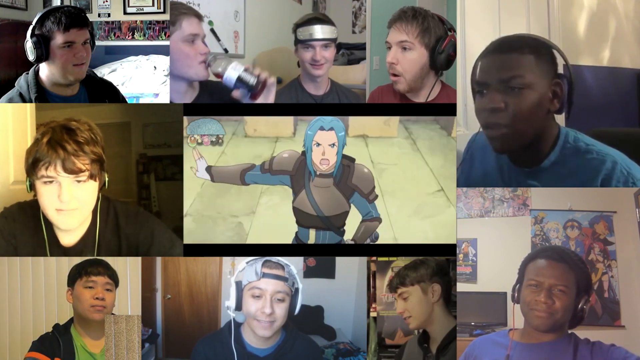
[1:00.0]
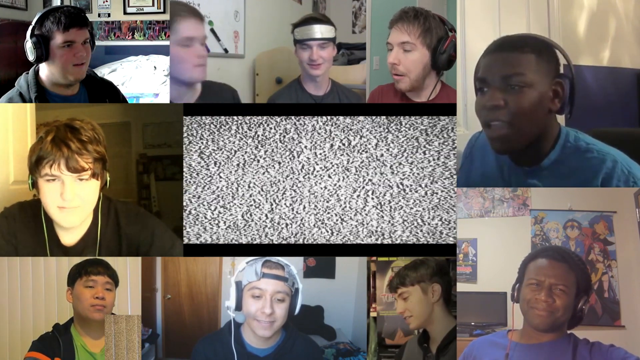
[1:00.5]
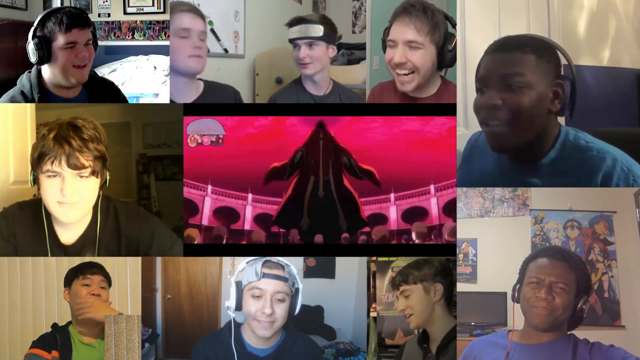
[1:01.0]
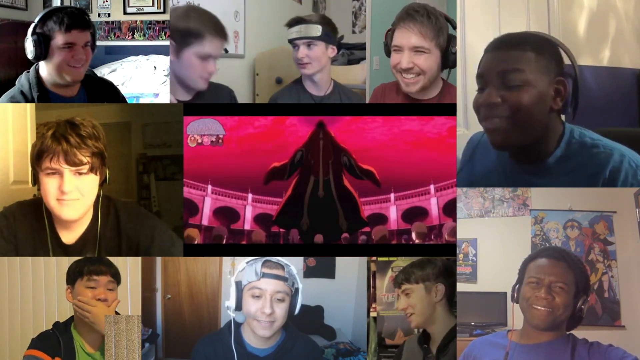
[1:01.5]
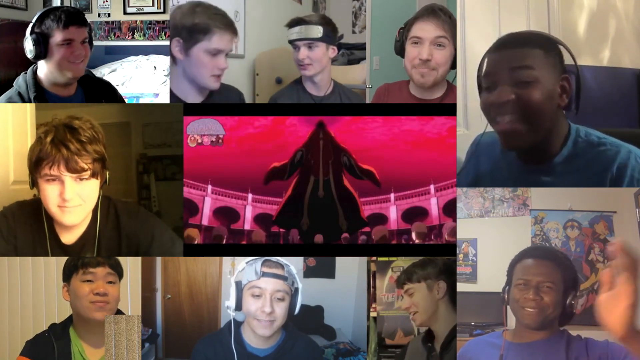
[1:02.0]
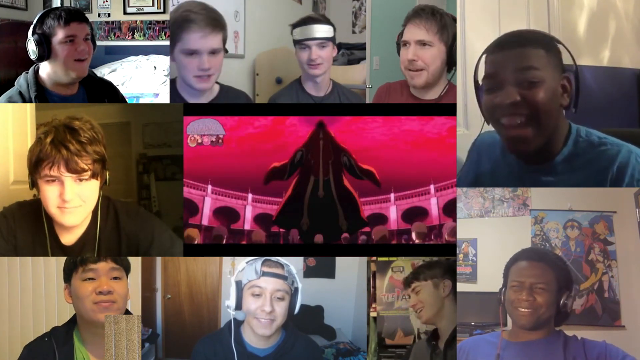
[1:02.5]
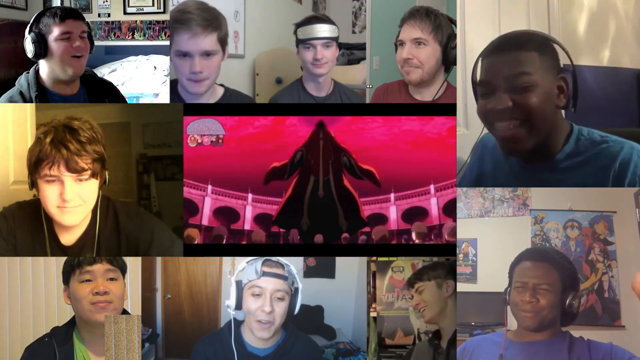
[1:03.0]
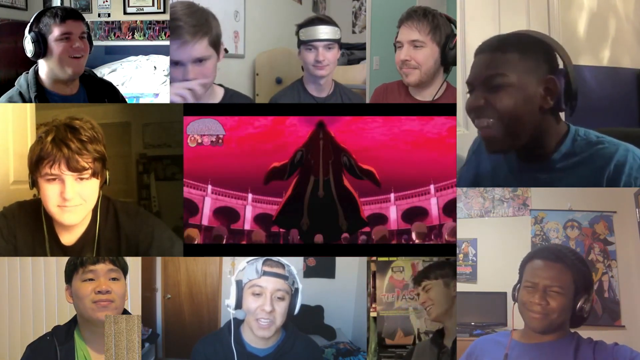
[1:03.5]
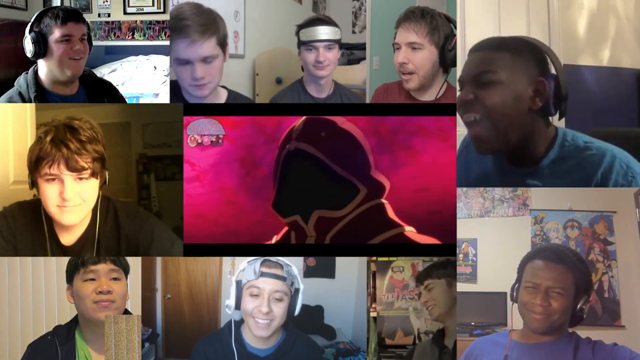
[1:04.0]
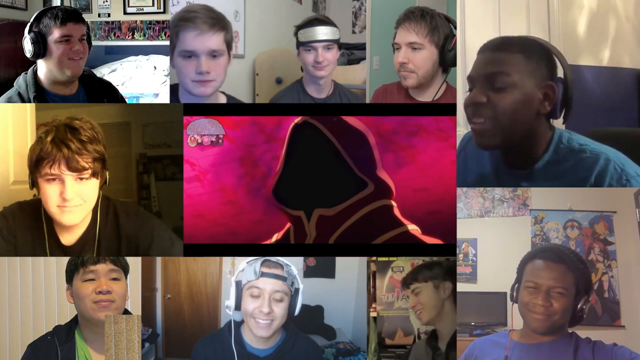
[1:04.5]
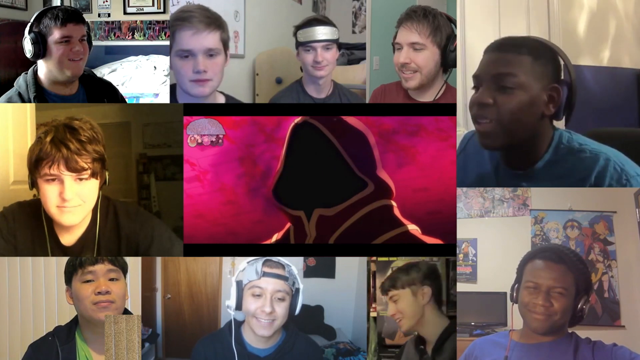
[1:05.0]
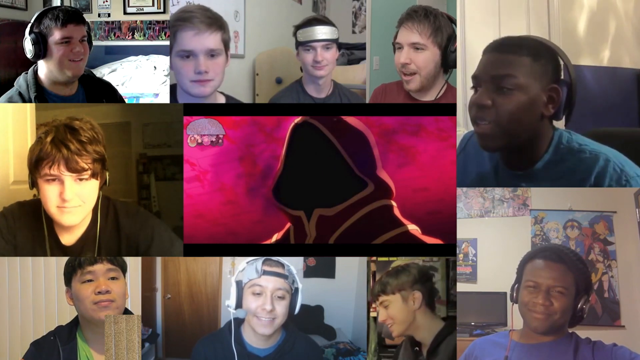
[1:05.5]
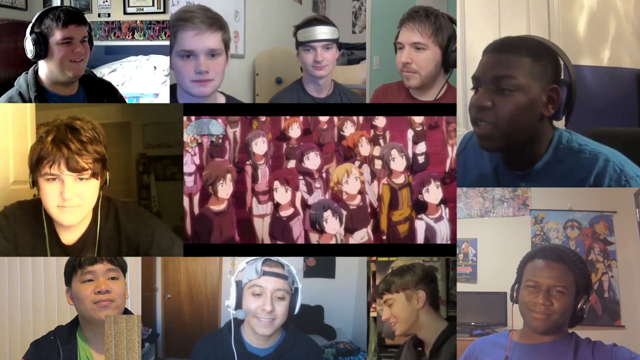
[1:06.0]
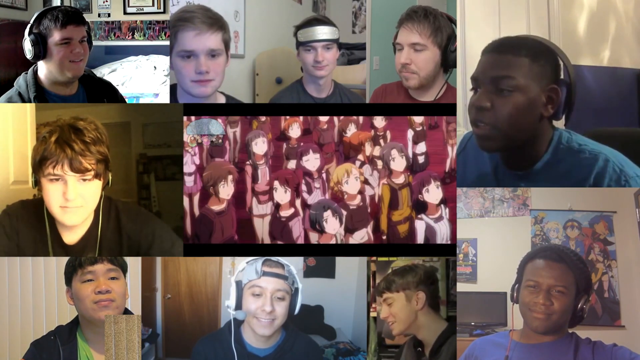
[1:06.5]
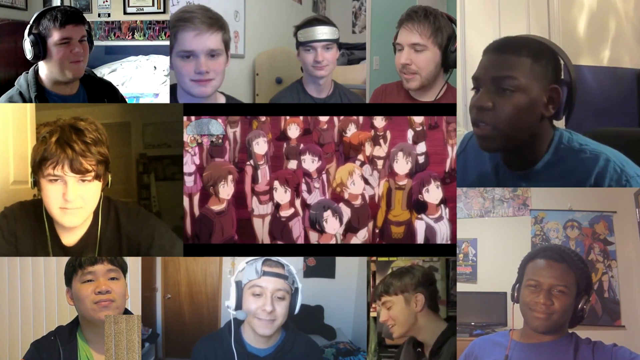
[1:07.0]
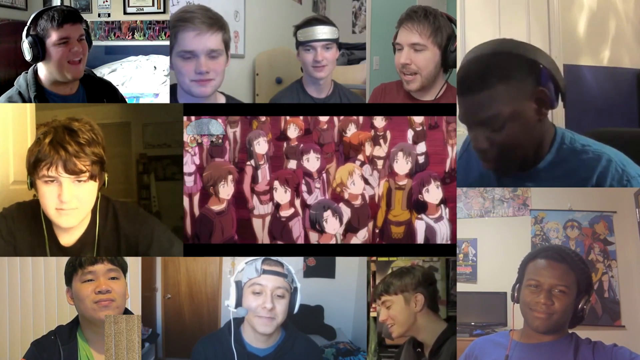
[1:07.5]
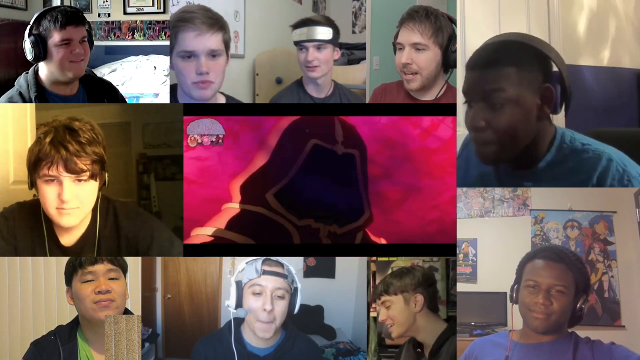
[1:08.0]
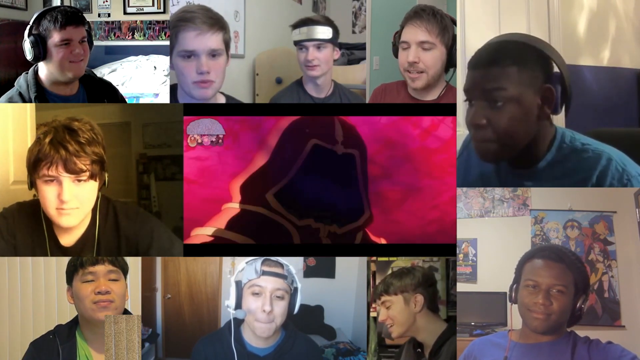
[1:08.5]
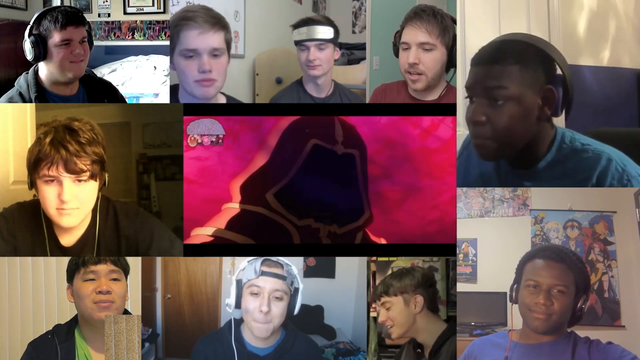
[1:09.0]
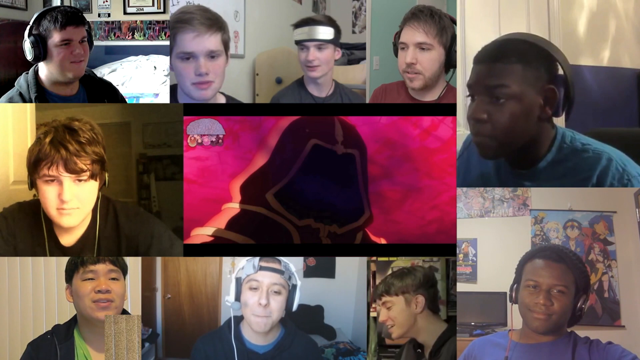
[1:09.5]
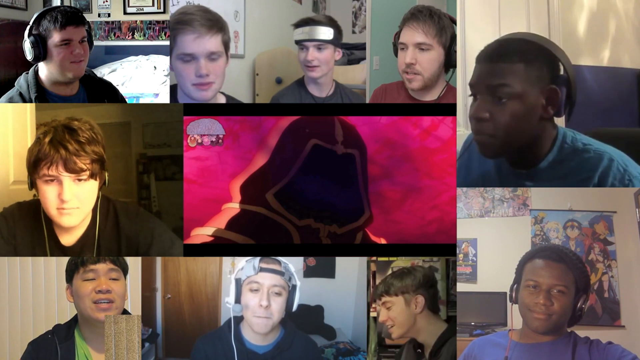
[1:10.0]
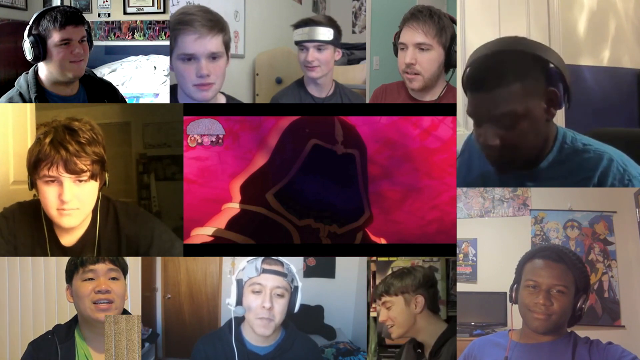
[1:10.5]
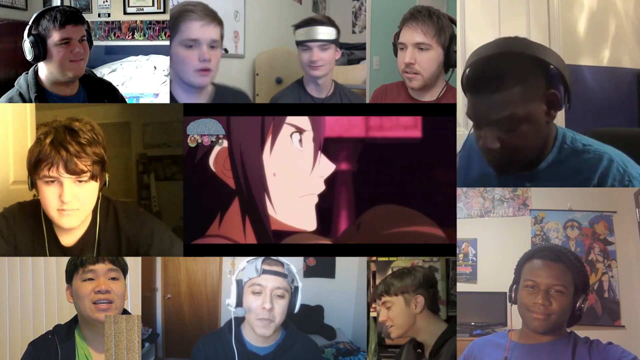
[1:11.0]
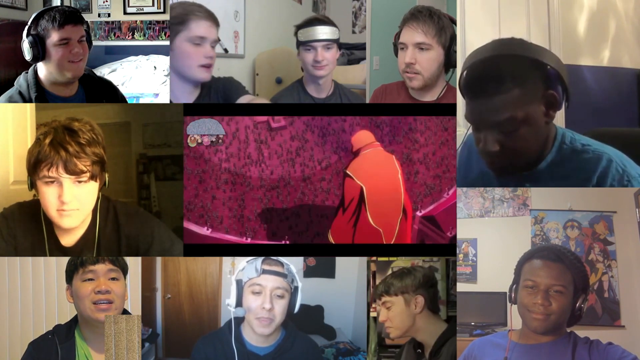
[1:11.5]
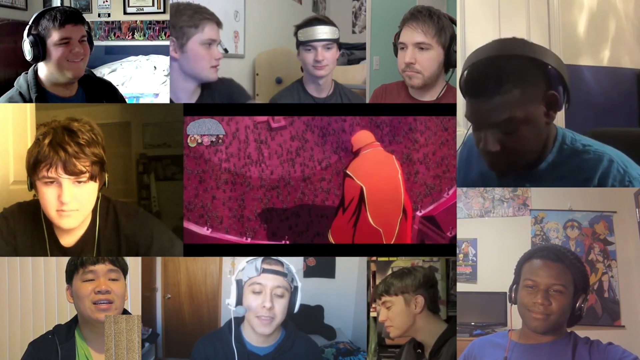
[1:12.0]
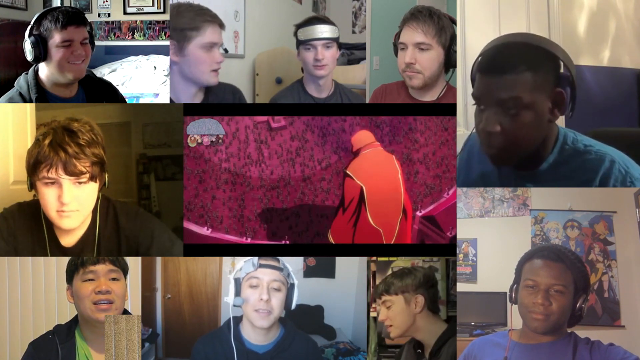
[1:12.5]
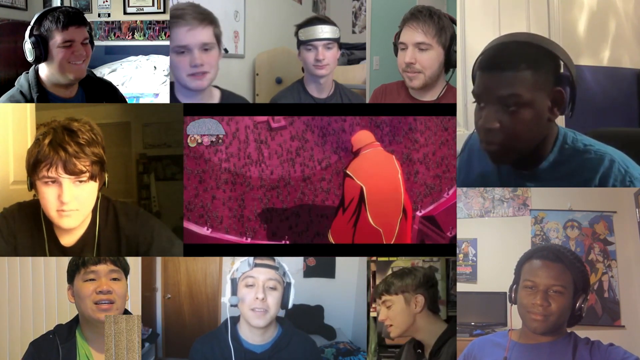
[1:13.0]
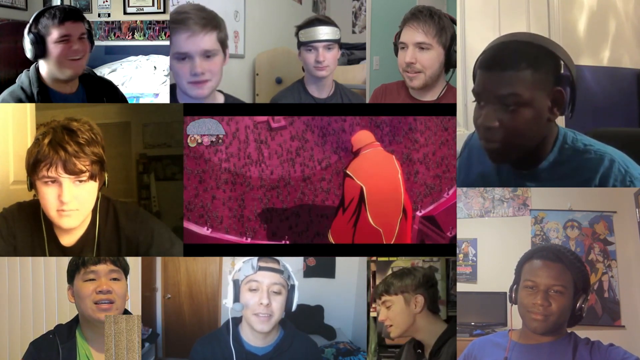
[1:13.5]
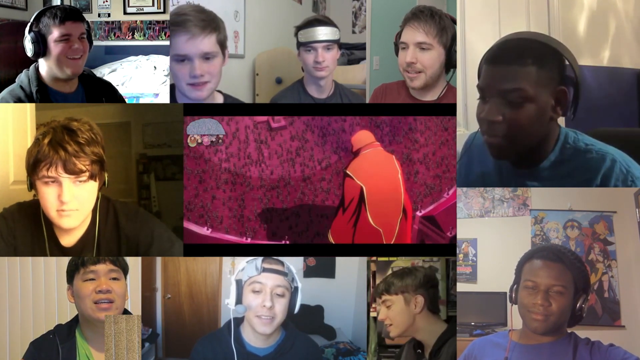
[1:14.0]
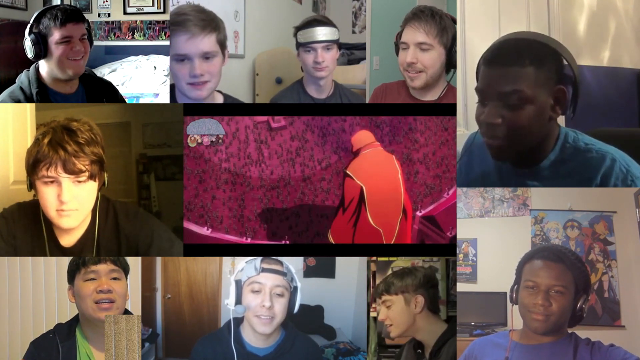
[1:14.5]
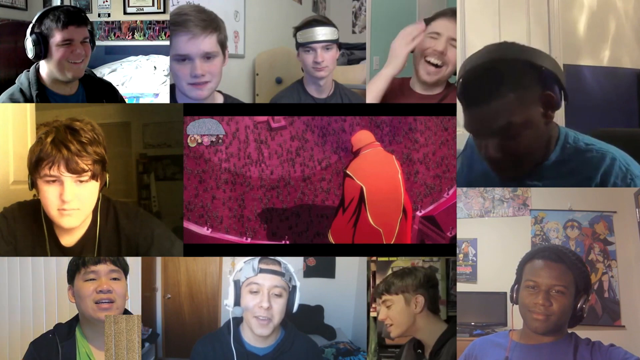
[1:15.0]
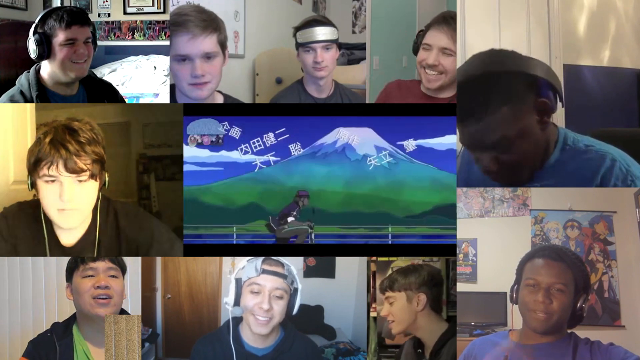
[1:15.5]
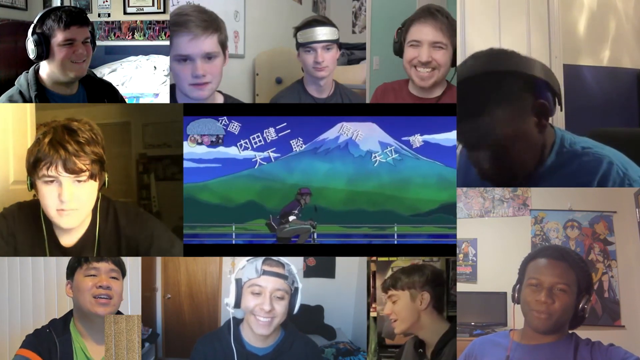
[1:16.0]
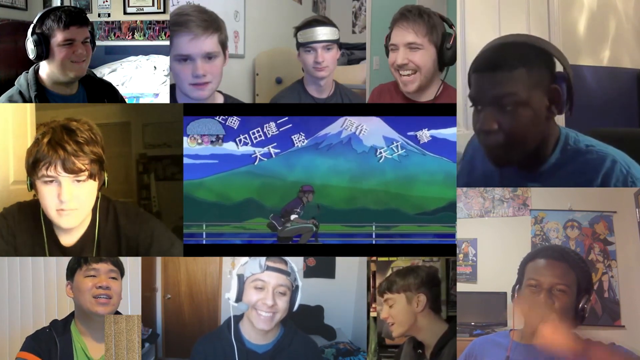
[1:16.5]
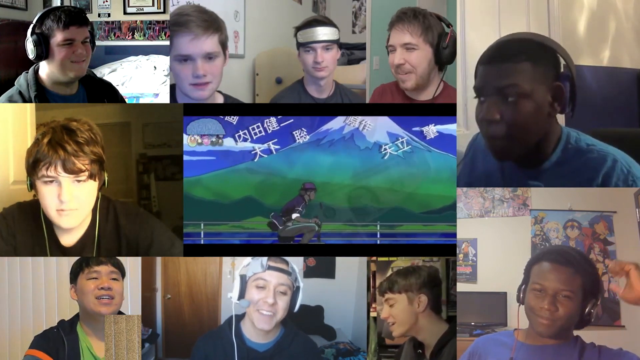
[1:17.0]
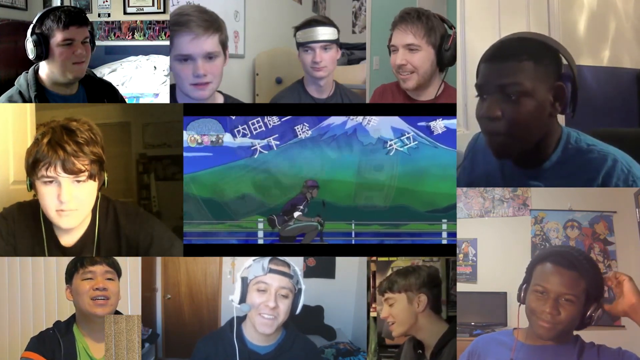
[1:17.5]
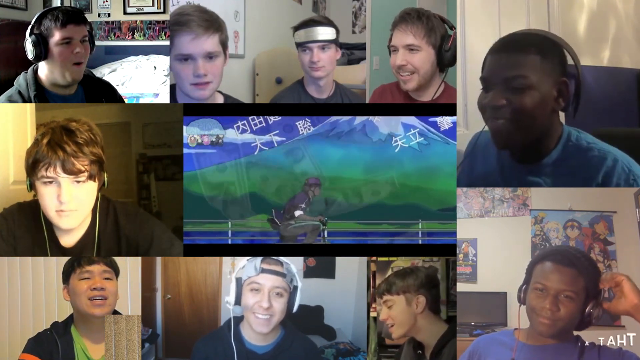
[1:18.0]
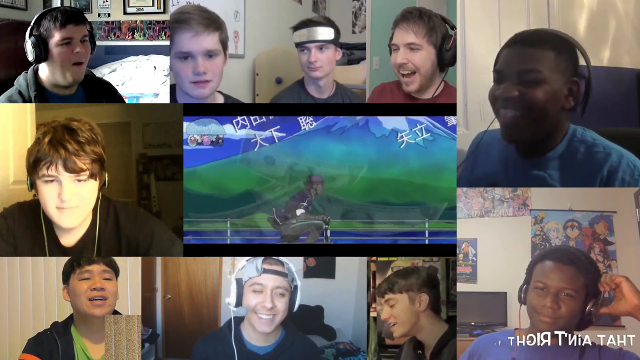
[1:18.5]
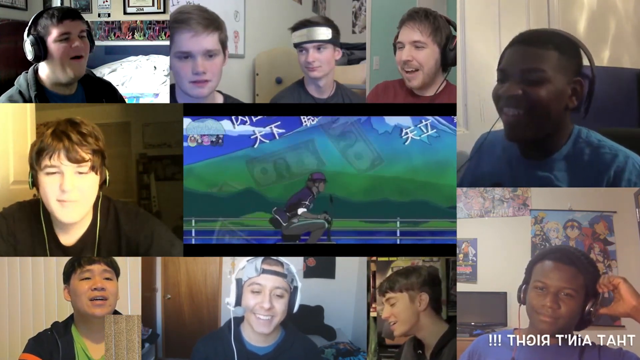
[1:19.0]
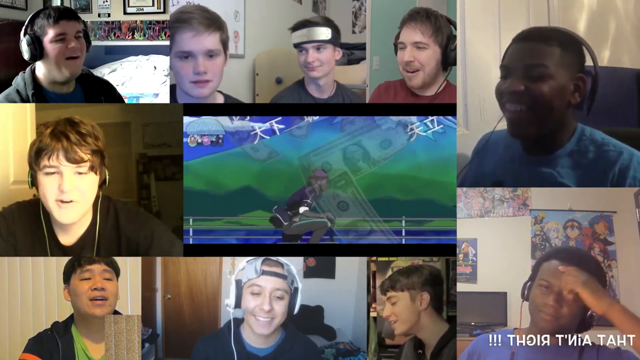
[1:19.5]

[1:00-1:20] A collage, kind of looking like a live stream, shows a group of guys watching anime clips together, kind of goofing off, laughing and reacting. An animated character with blue hair looks really mad. It transitions to a kind of red atmosphere with some kind of large black figure, and everybody reacts. The figure's face is shown up close, then a crowd of characters kind of looks at the figure, and it focuses on the figure up close again. The side of a character's face appears, then the back of one of these figures, who wears a large red cloak, and the guys kind of react and laugh. It then transitions to a video showing kind of a mountainous area and a guy sitting on a chair, with Asian text on the screen. He looks like he is on a moped or something, zooming by really quickly. Cash kind of overlays the screen, and the guys act silly.